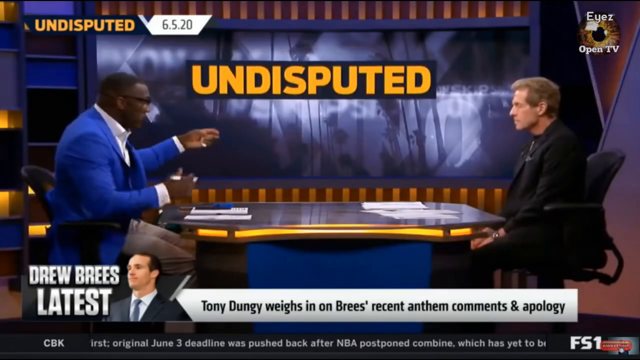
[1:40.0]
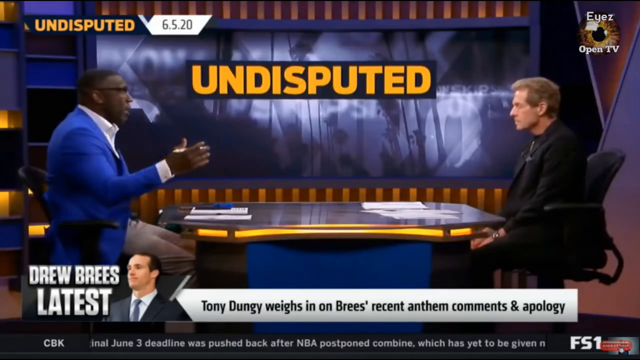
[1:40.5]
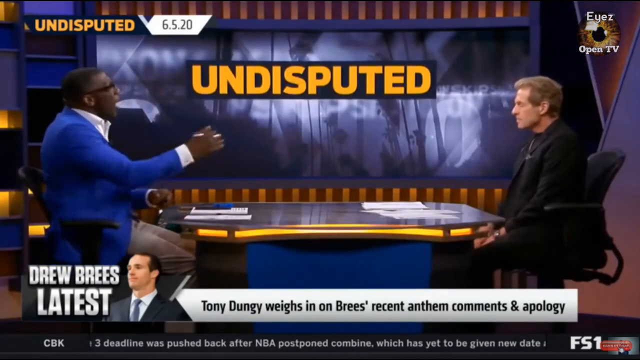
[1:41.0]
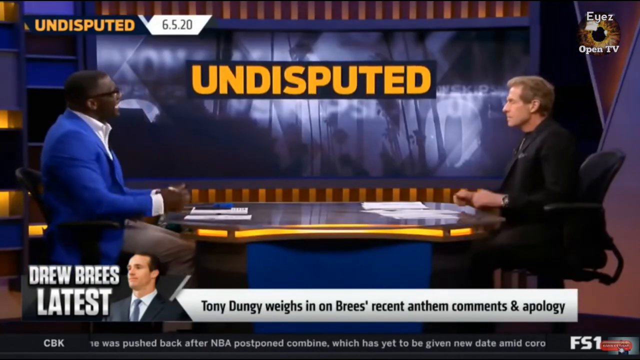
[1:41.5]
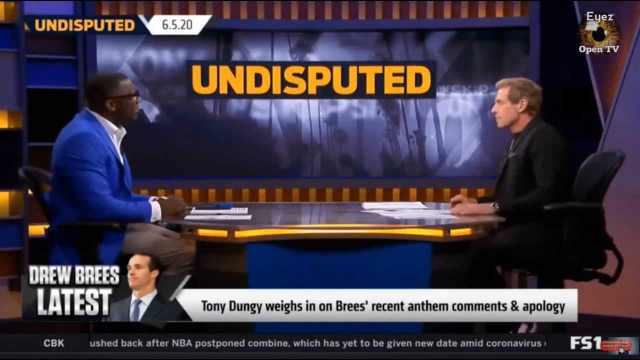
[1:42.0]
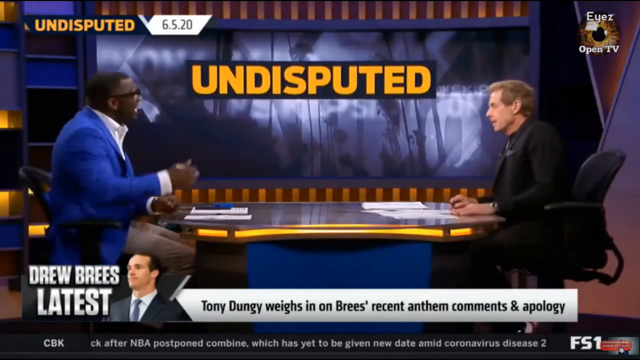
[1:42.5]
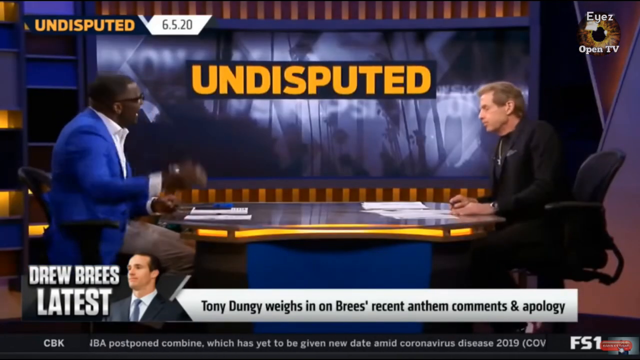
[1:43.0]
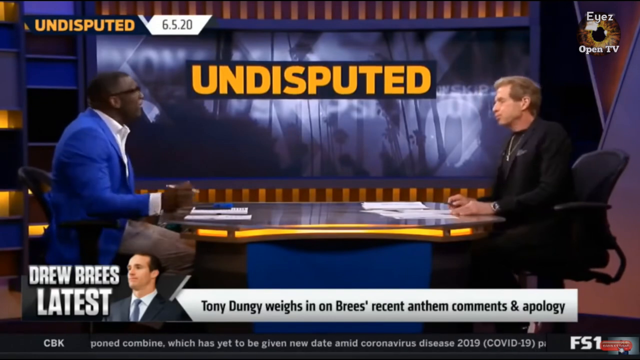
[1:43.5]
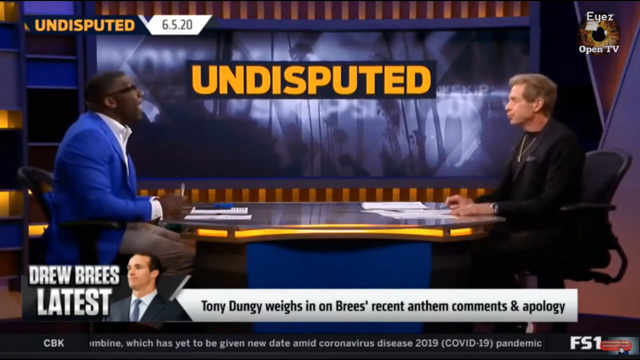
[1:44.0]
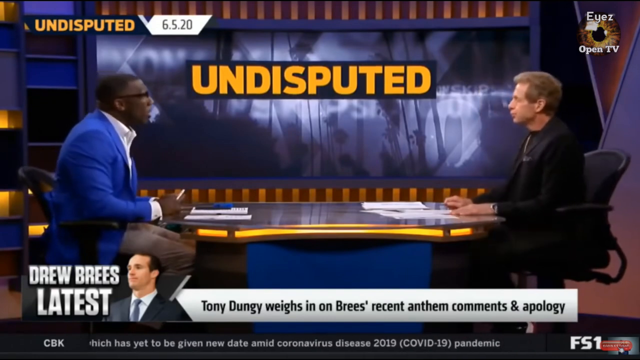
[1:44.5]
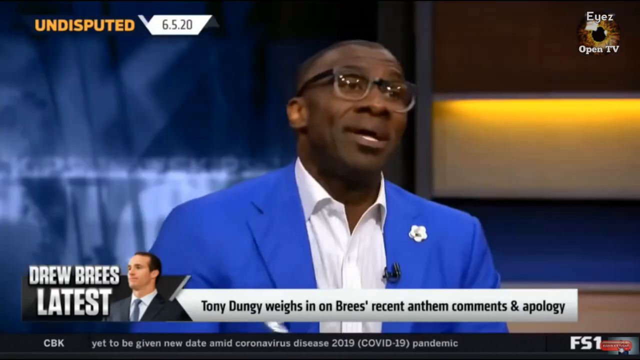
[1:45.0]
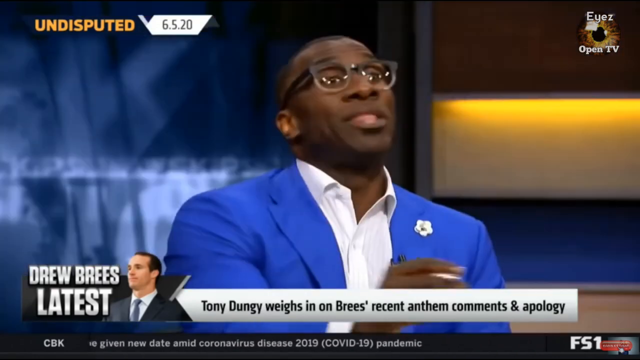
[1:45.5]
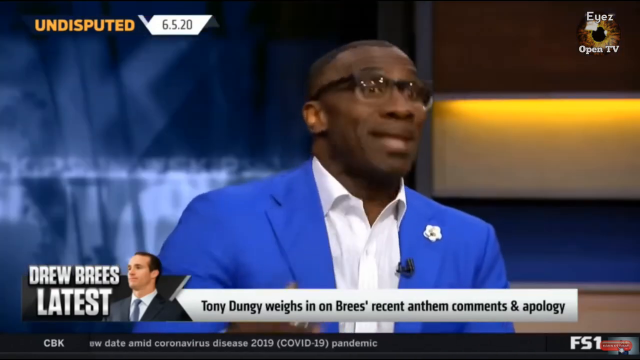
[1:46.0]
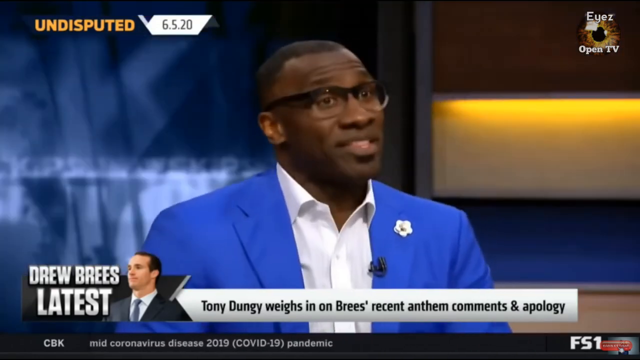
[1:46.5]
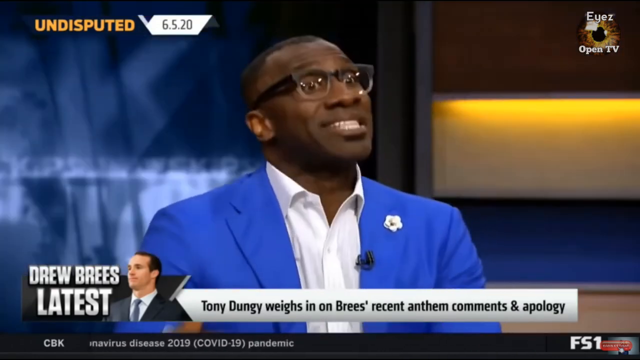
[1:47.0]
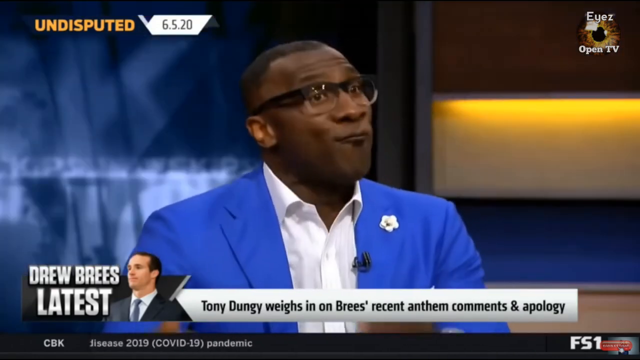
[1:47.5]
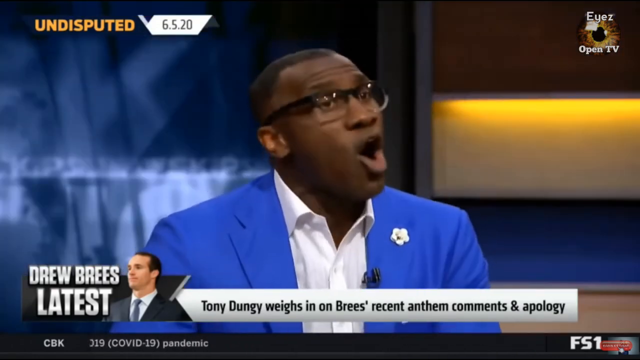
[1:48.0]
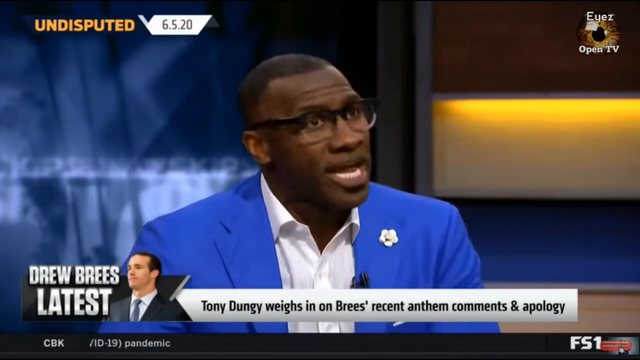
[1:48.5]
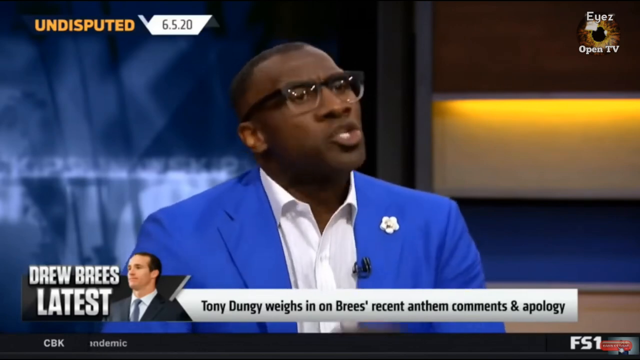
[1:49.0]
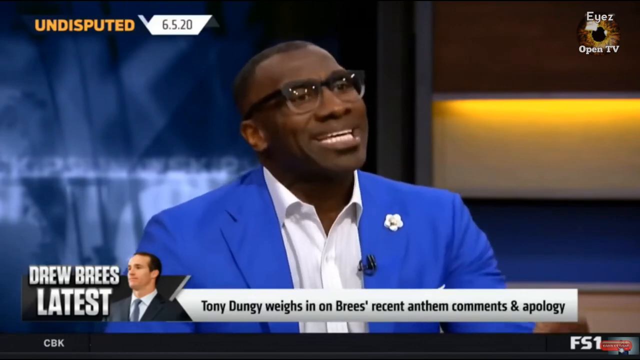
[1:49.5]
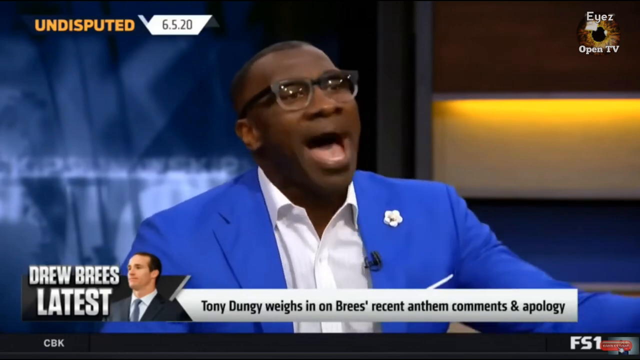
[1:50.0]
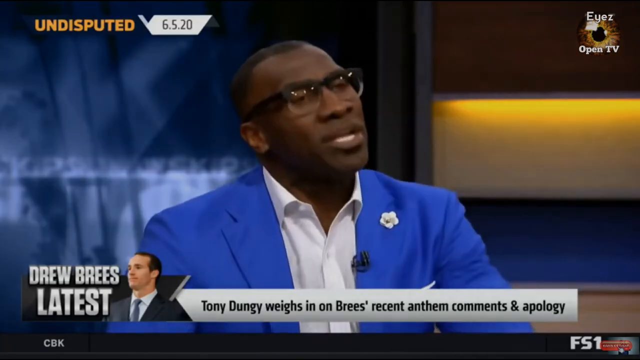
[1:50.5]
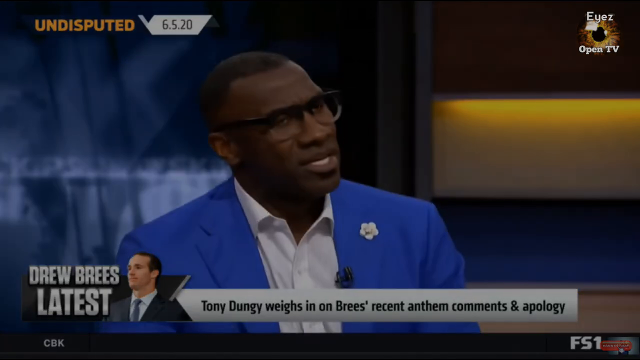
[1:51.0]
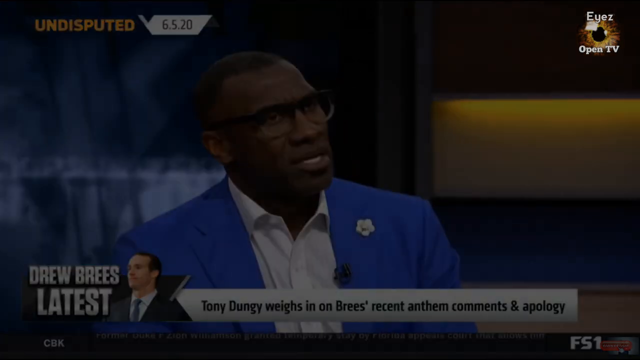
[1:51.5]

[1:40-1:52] "Undisputed" appears twice: in orange in the upper left-hand corner, and in the middle on part of the wall. Next to the first one, apparently the date, "6.5.20" appears in black. In the top right-hand corner is "EYEZ" with a capital E, with a brownish eye whose middle part is black, and beneath it "Open TV" in white. At the bottom, "Drew Brees latest" appears with a white man in a blue hat next to it, along with text about Tony Dungy ending in "anthem comments and apology". Shannon Sharpe is still talking the whole time, nodding his head, using his hands and raising them up. He does not look upset but seems more confused.